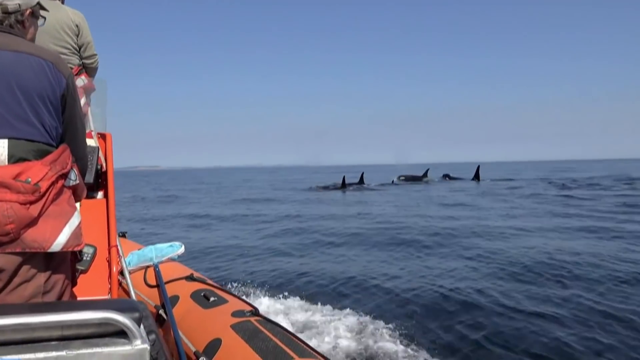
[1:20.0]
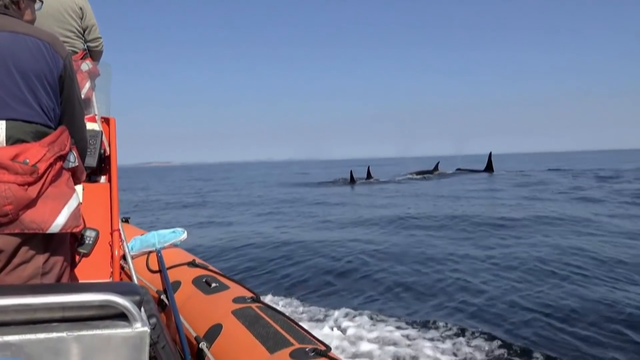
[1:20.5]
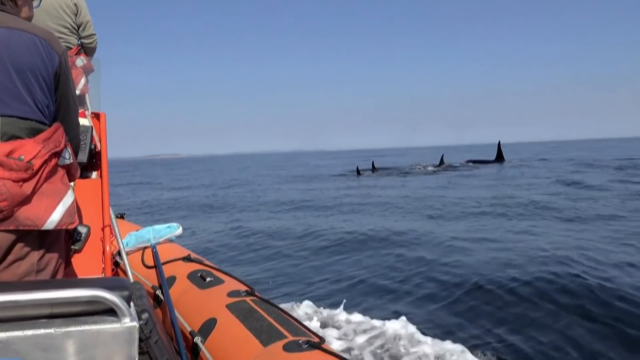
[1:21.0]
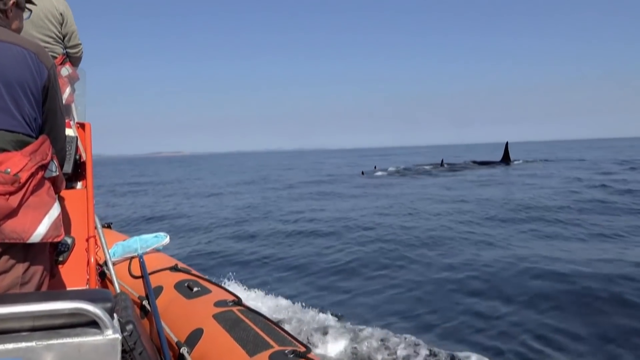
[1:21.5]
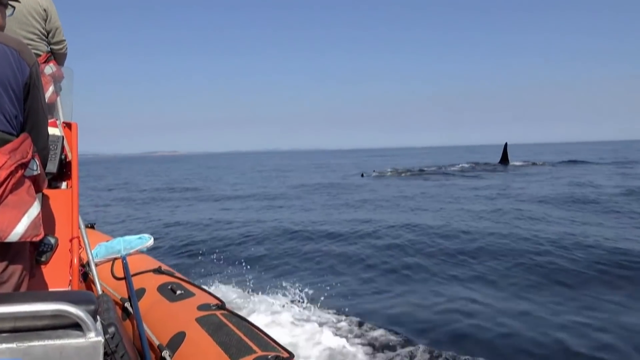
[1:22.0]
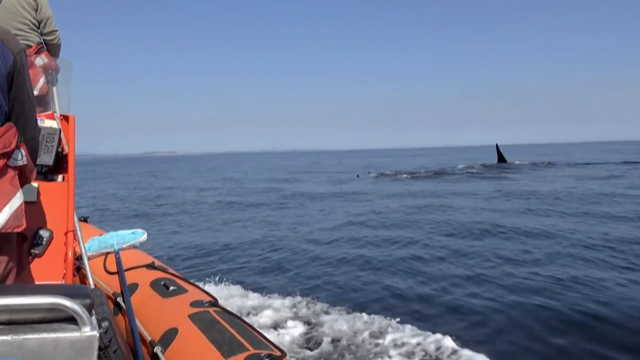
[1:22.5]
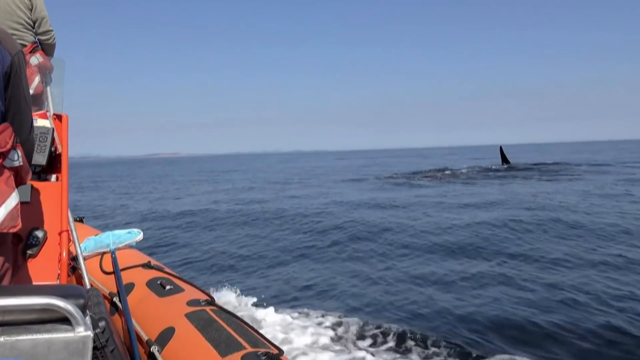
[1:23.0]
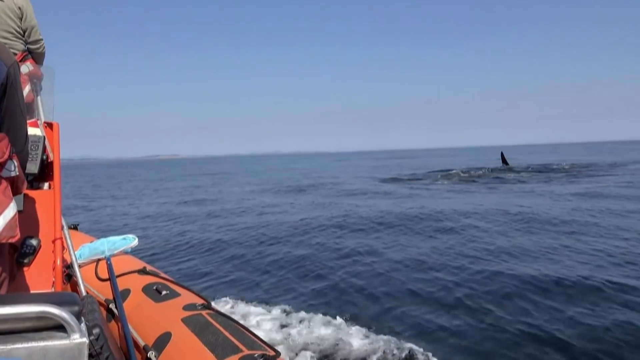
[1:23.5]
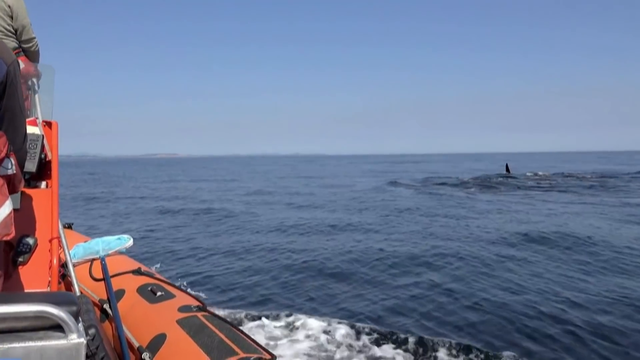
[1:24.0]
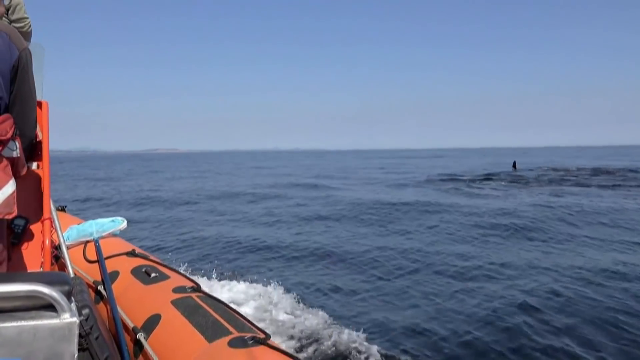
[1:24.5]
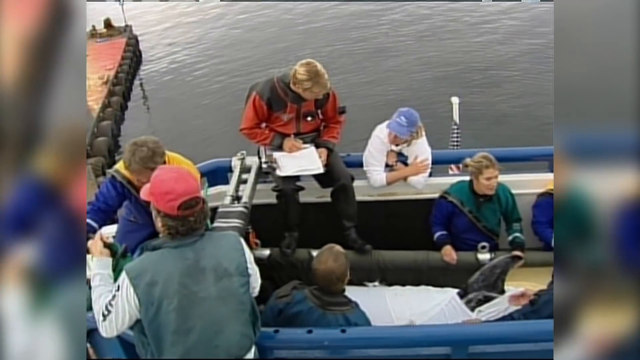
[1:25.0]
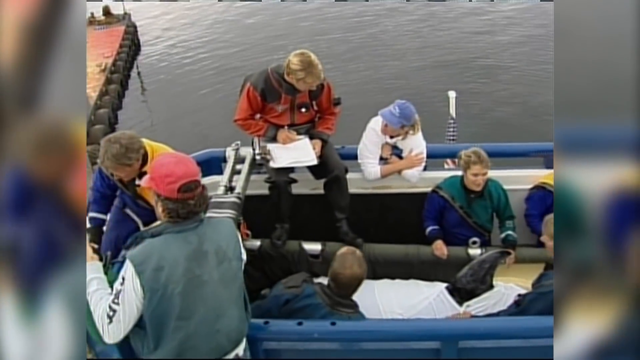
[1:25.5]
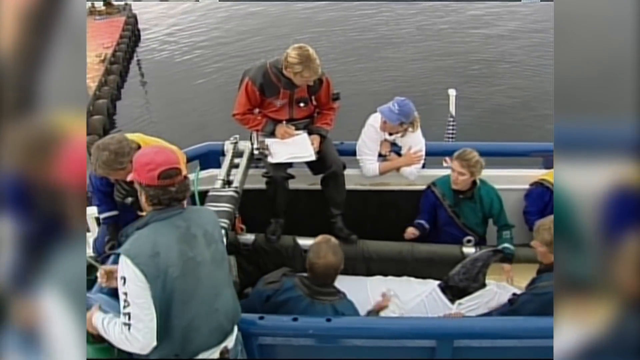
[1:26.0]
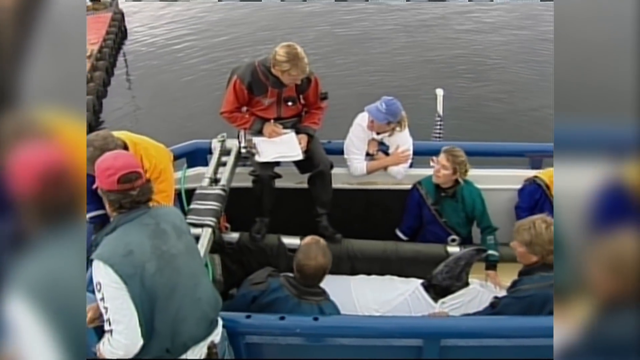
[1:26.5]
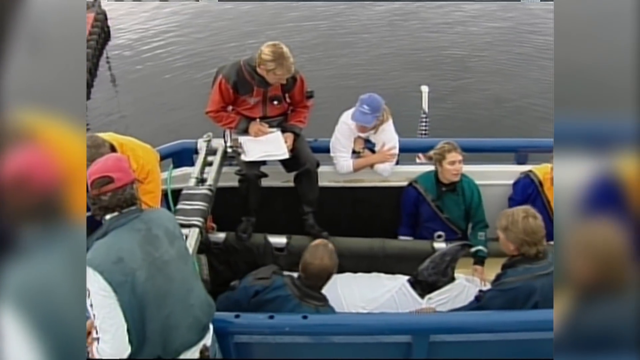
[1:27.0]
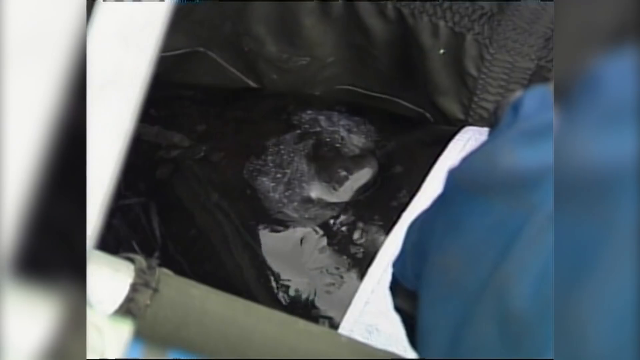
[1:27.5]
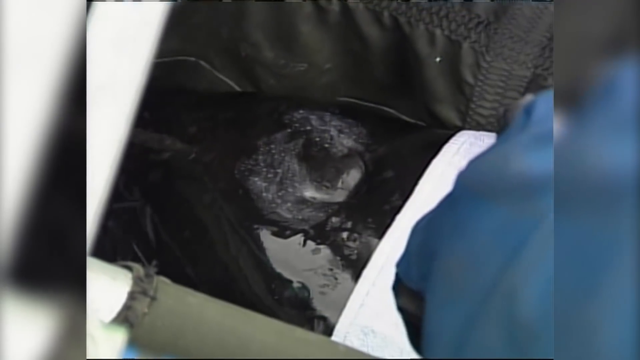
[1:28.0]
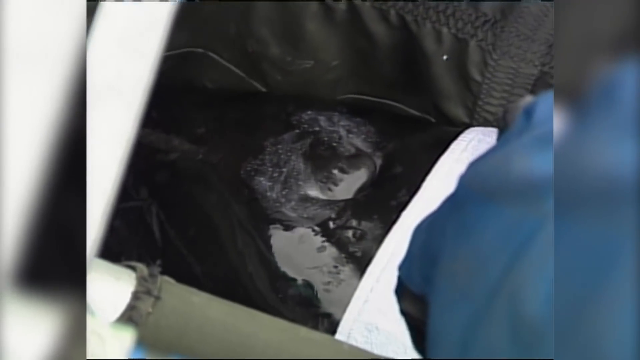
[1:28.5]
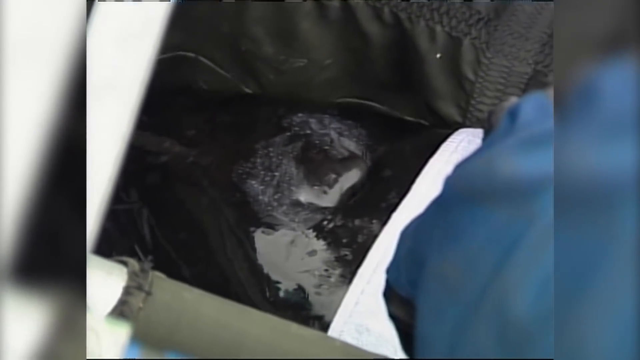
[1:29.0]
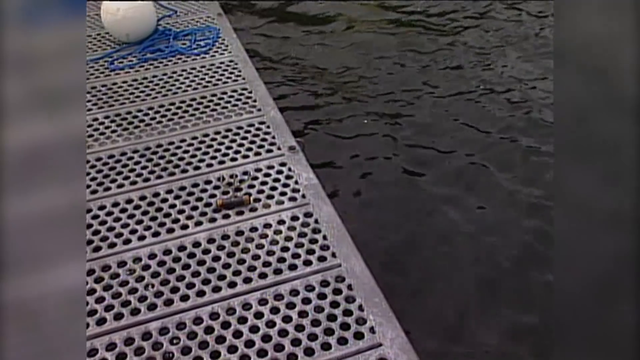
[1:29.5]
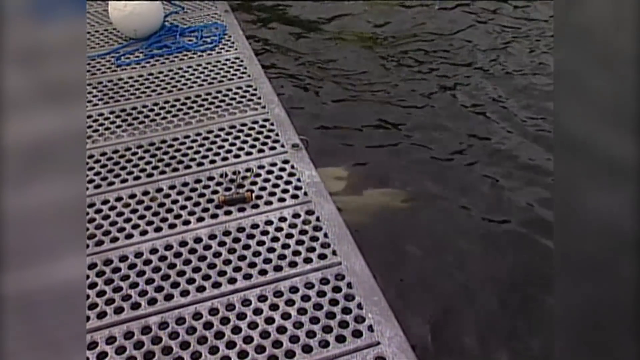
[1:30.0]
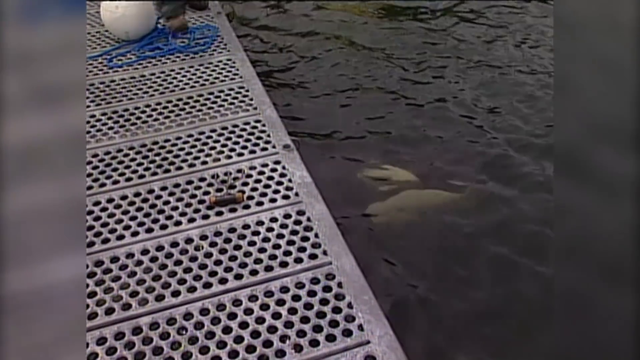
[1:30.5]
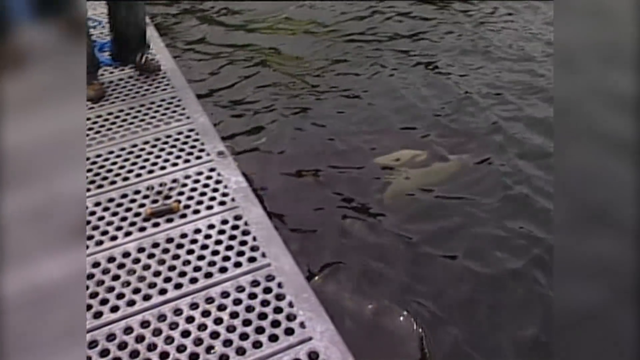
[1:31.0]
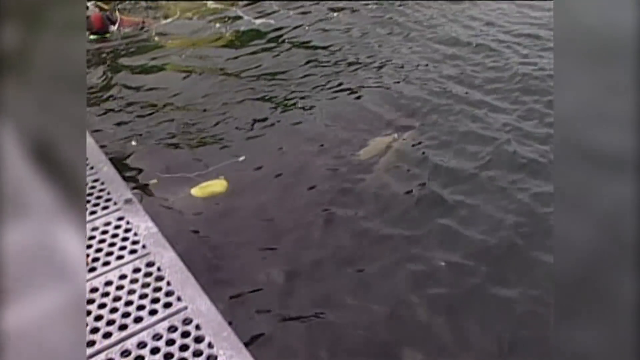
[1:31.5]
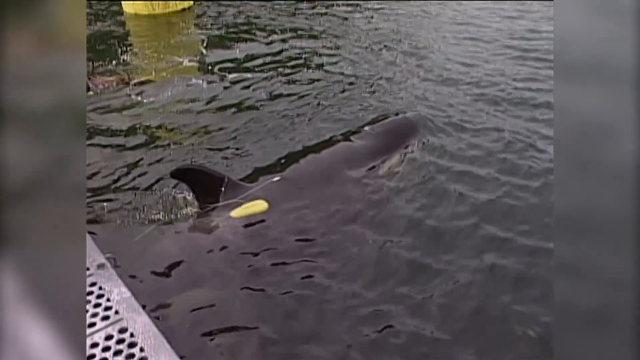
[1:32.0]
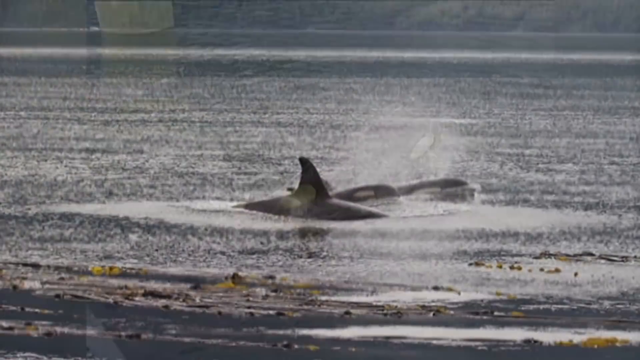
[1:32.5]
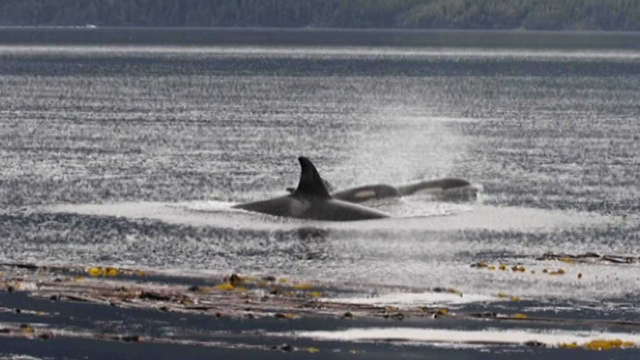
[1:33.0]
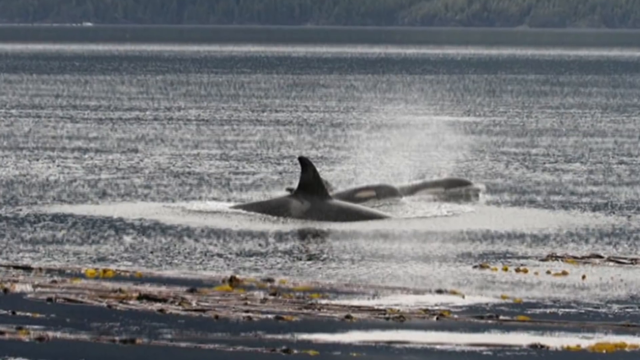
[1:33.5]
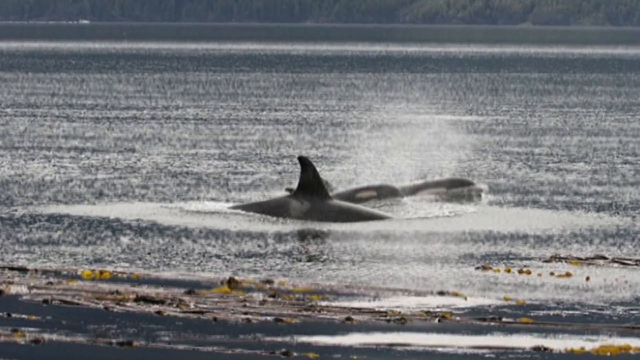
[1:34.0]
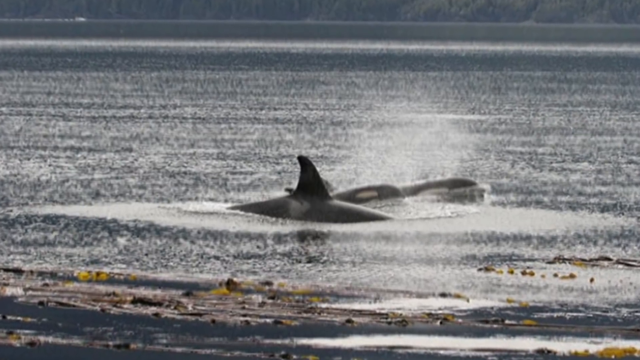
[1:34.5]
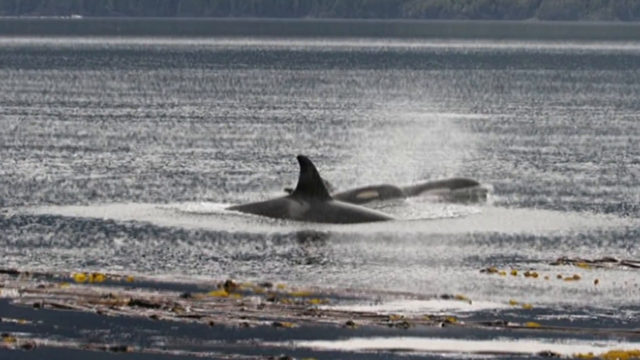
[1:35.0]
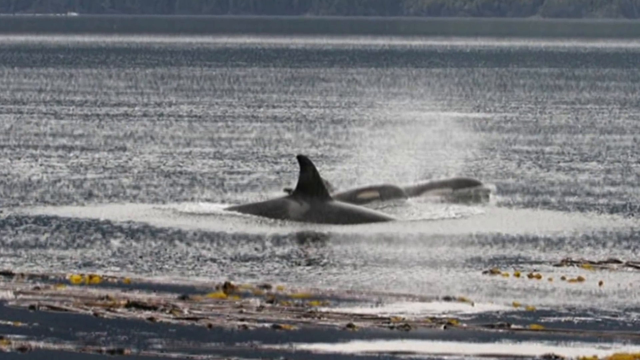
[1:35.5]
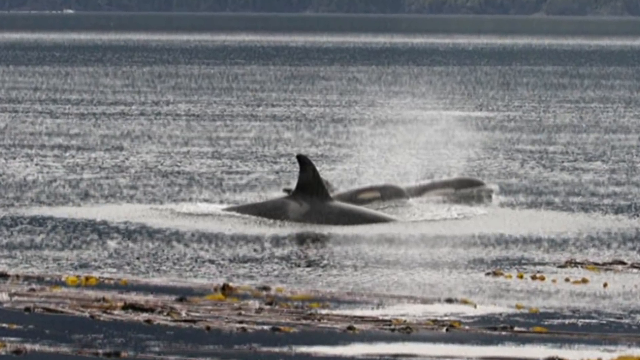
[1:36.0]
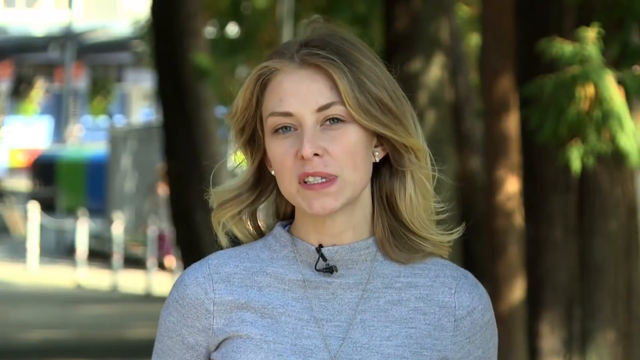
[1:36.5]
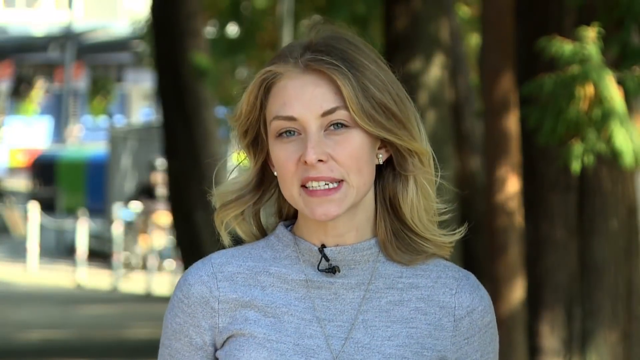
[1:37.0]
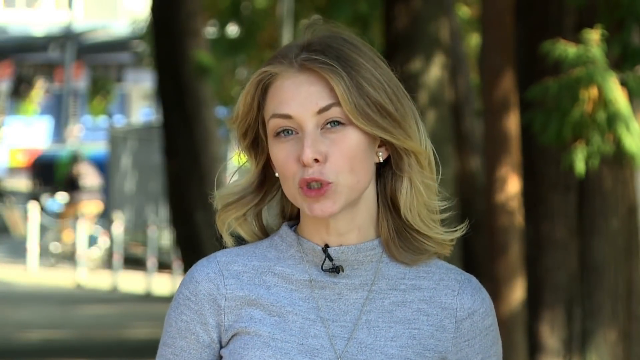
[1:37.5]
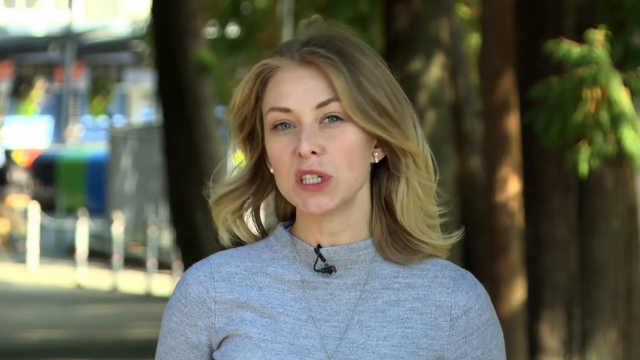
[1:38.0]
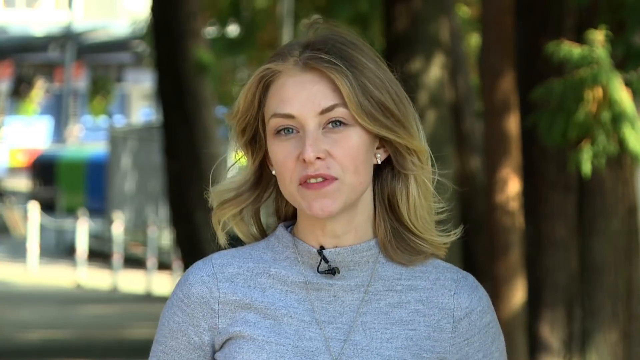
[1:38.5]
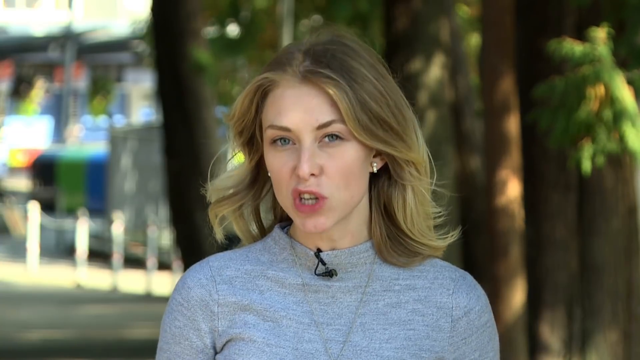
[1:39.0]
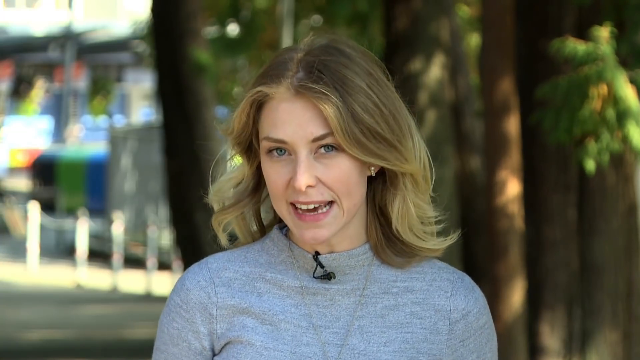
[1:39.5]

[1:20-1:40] A closer view shows the orange boat driving through the water. The people on it, men, are wearing red items, and there appear to be around seven people sitting in the boat, doing something that cannot be made out. A blonde-haired woman then appears, standing in a place that looks like a garden. She looks to be between 40 and 43 years old and seems to be talking, shaking her head as if speaking to someone.